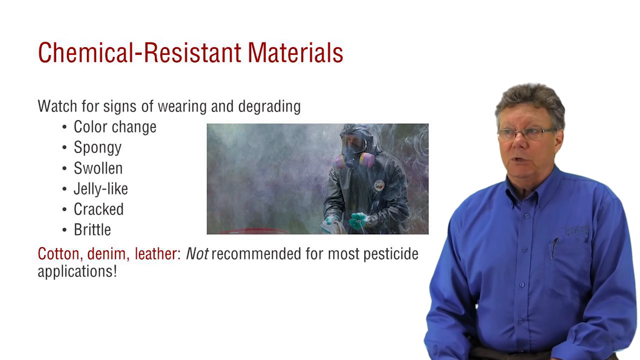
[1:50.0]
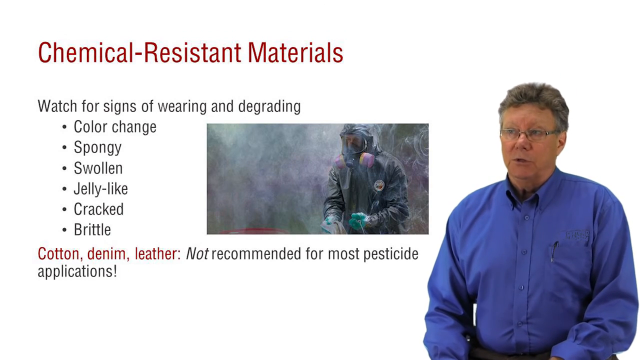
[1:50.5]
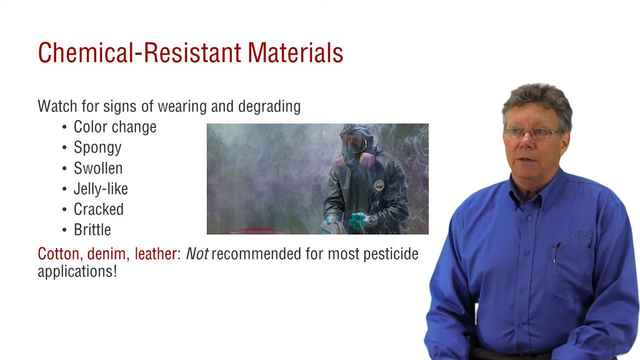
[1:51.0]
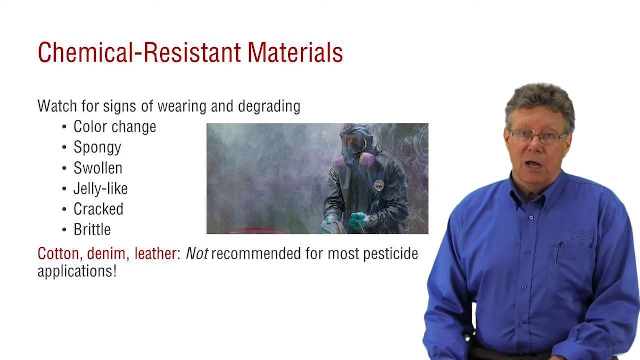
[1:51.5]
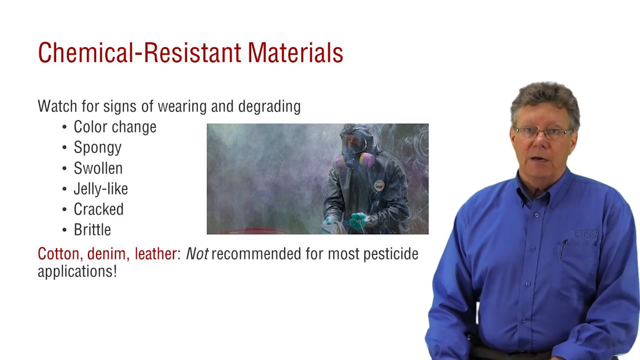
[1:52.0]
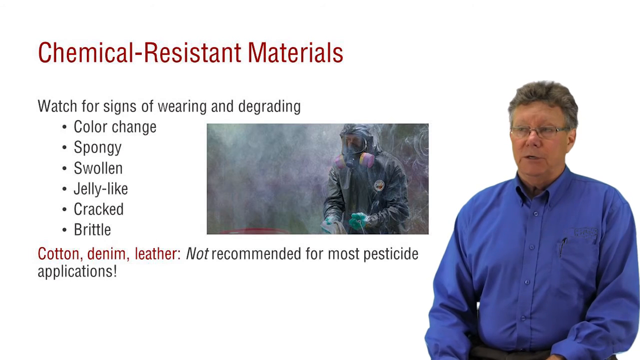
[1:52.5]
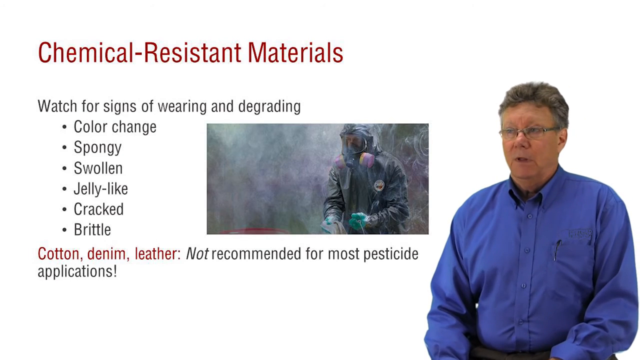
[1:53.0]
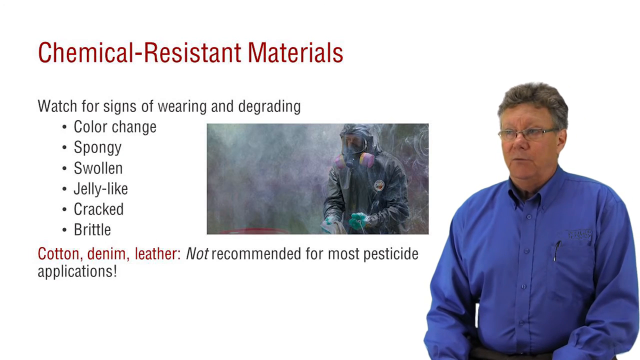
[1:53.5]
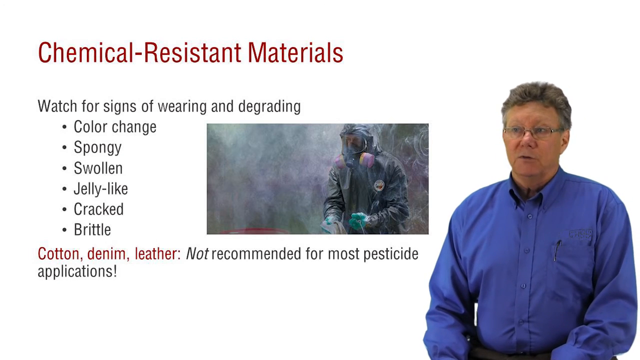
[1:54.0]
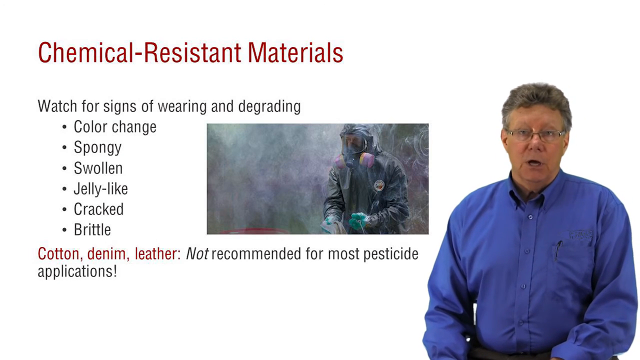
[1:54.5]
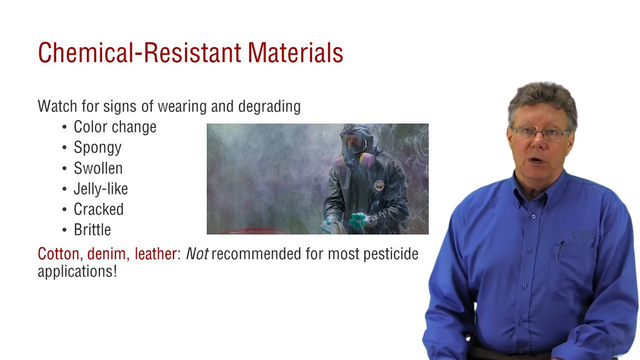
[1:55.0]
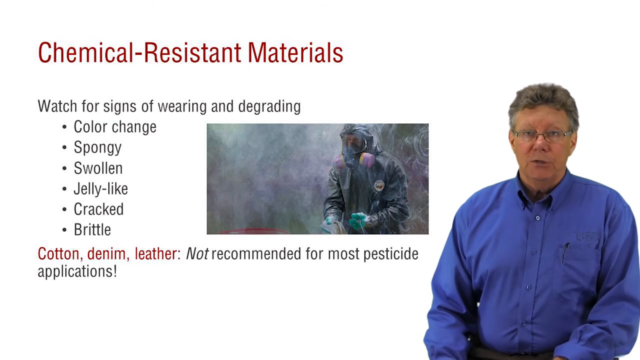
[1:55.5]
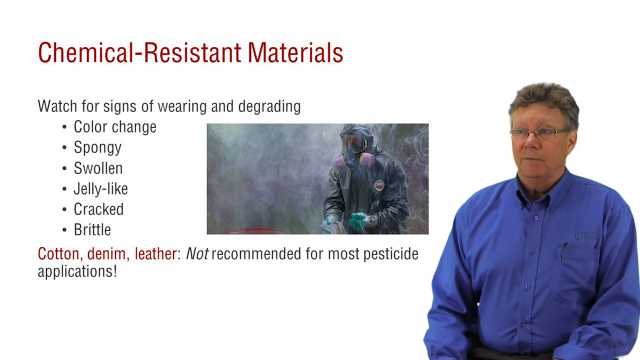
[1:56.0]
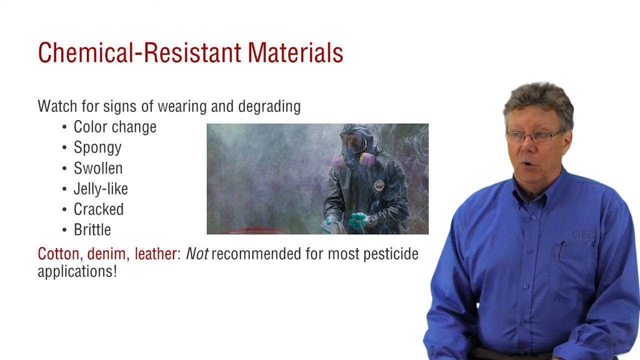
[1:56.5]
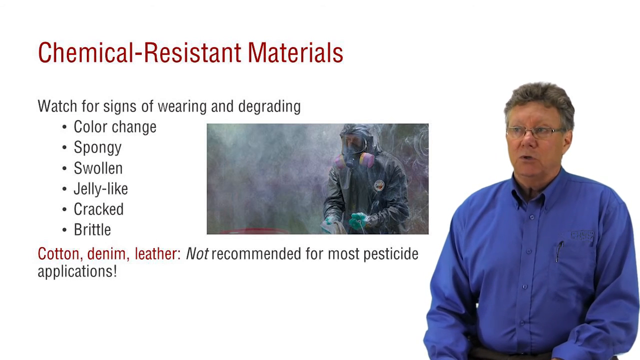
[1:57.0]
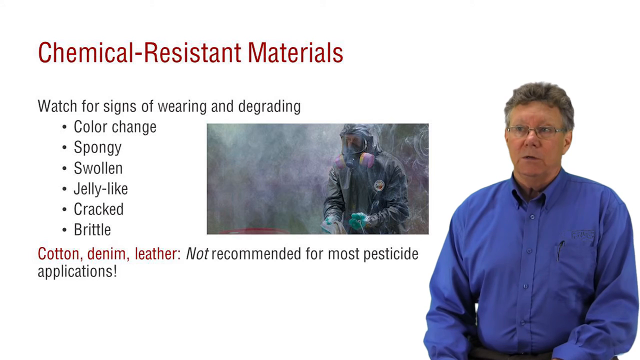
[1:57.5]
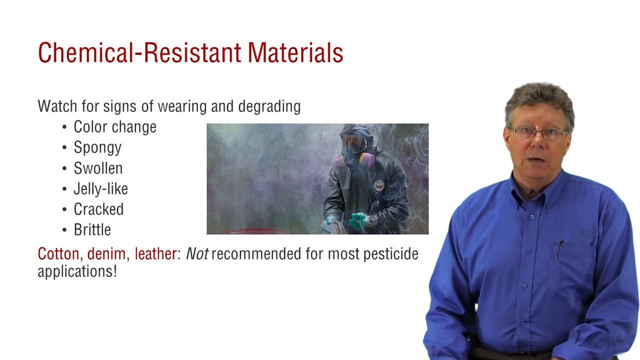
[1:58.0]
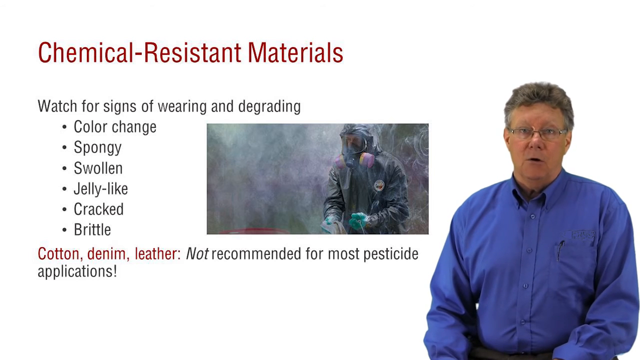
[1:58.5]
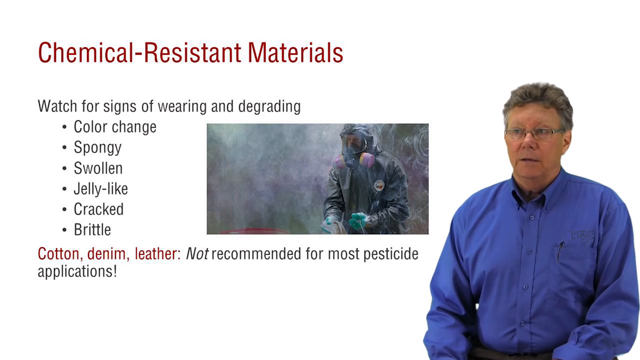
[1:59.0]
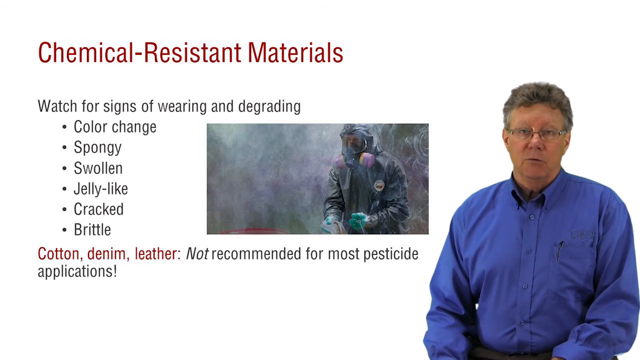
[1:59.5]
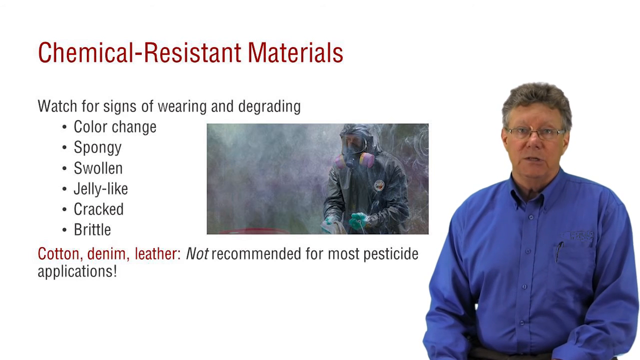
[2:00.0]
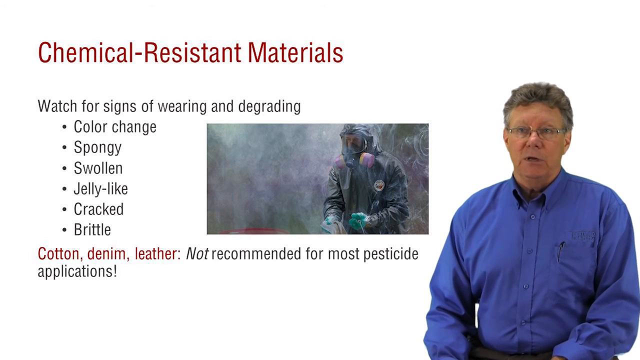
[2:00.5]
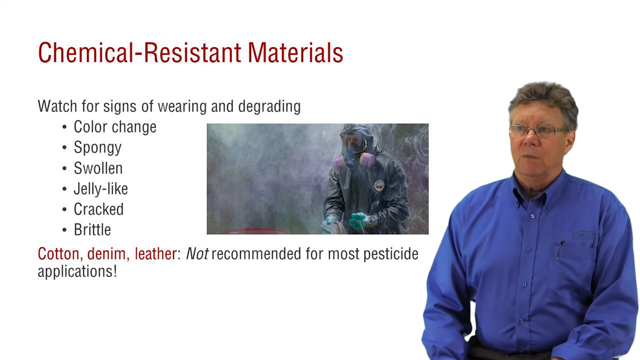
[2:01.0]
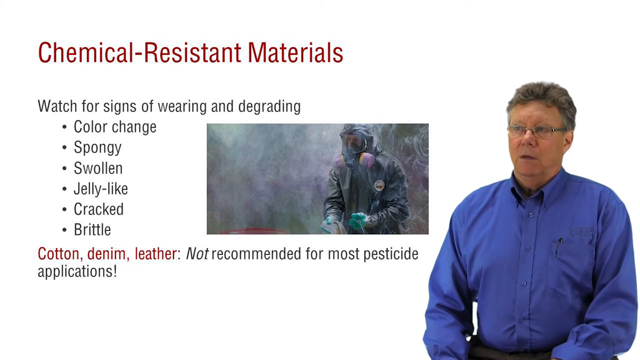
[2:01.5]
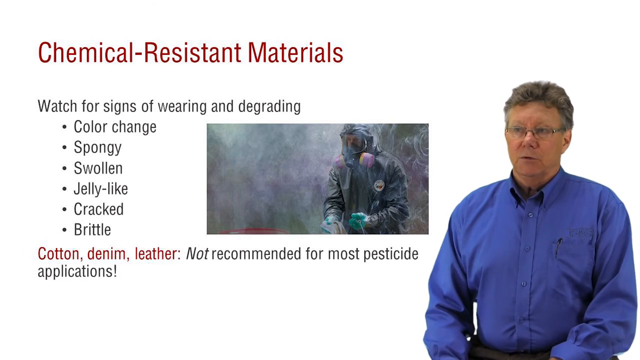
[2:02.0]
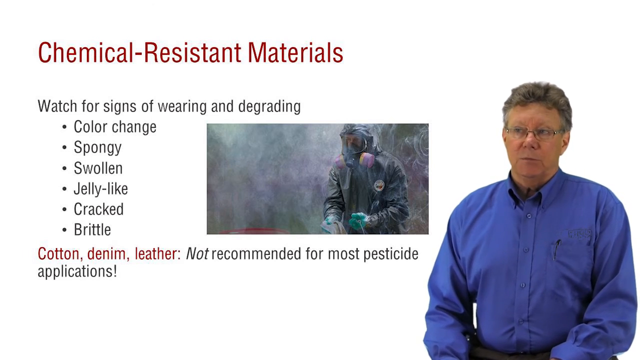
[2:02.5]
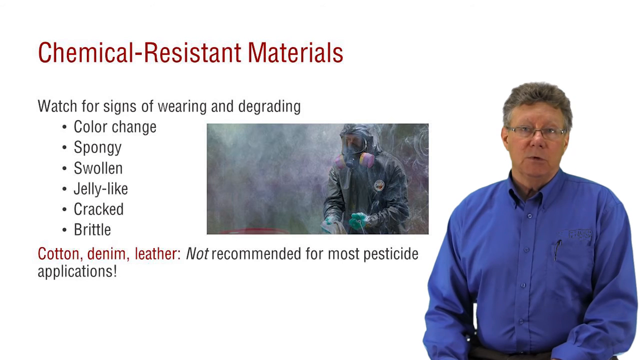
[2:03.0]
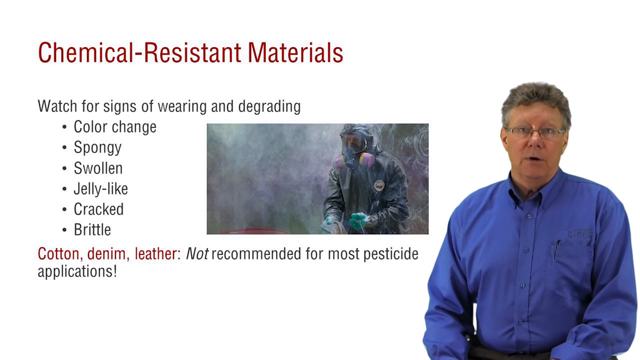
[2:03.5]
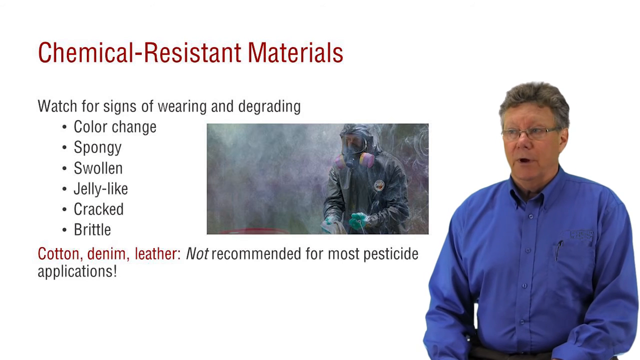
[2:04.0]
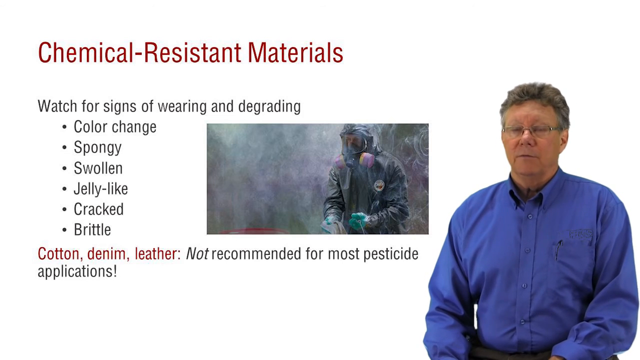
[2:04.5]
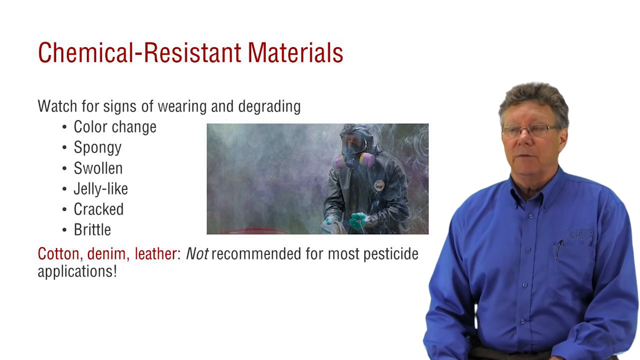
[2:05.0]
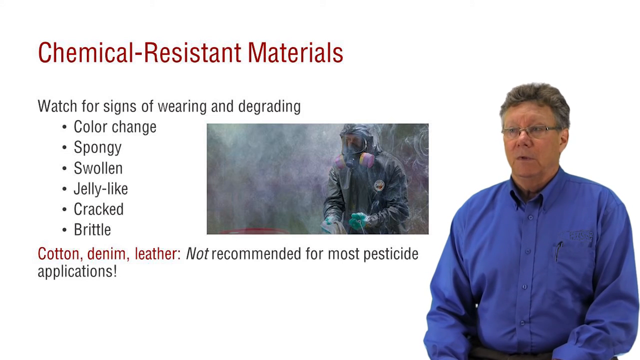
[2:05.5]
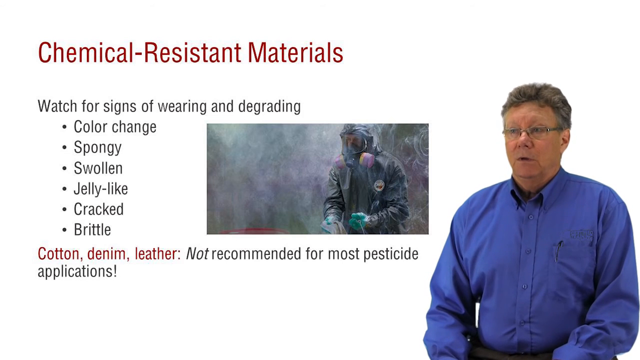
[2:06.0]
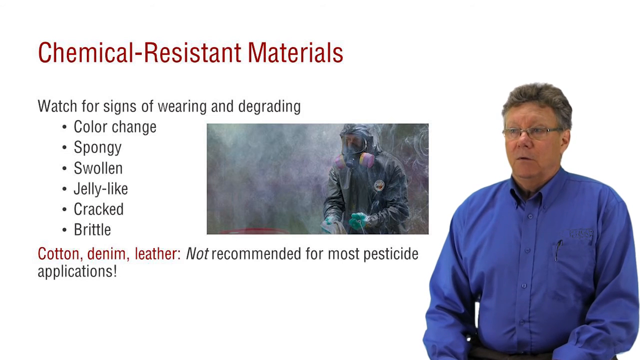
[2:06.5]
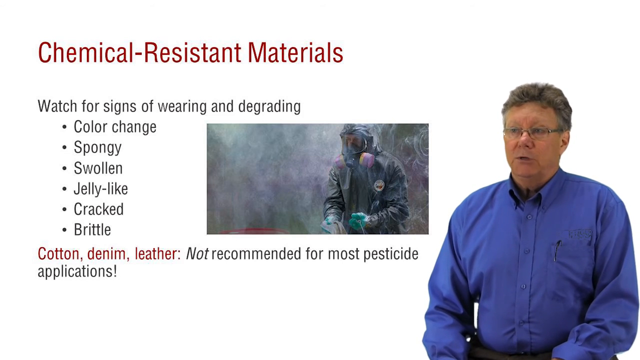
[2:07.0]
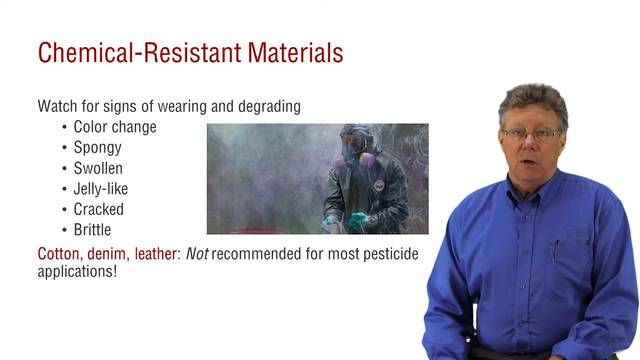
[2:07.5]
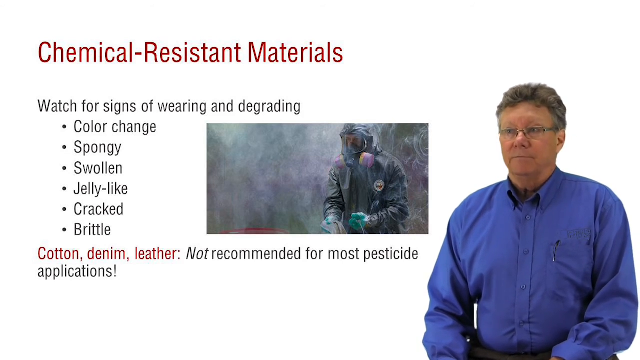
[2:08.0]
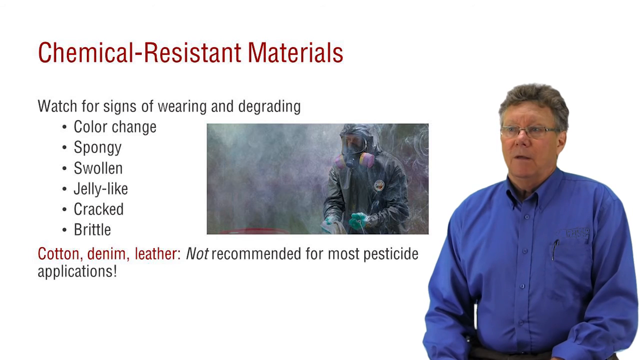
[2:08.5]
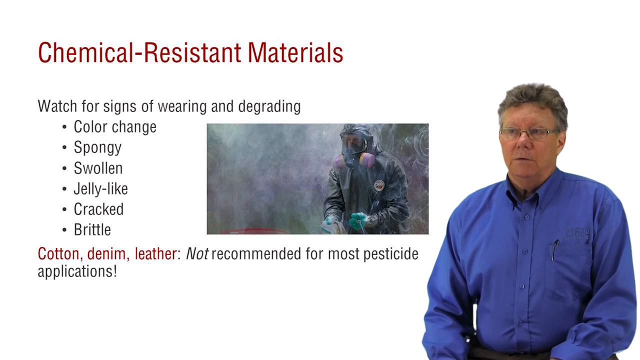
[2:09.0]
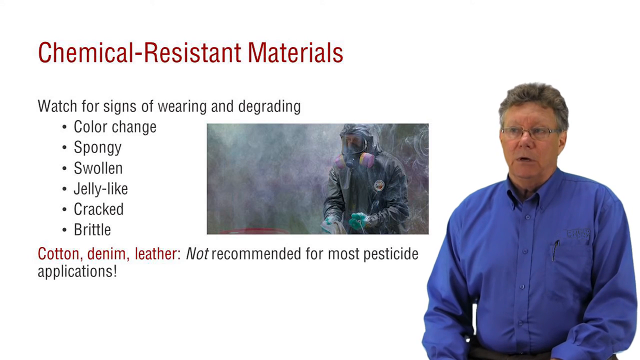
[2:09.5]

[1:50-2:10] A man stands in a one-piece protective outfit with long green gloves, a mask, and a white and black circular company label, with fog around him. Red text reads "chemical-resistant materials," and black text reads "watch for signs of wearing and degrading," followed by a bulleted list of six items: "color change," "spongy," "swollen," "jelly-like," "cracked" and "brittle." Then it says "cotton, denim, leather, not recommended for most pesticide applications," with "cotton," "denim" and "leather" in red and the rest in black. To the right, a man in a long-sleeve blue button-down shirt, with clear glasses and grayish-brown hair, speaks while looking straight ahead and nodding his head.